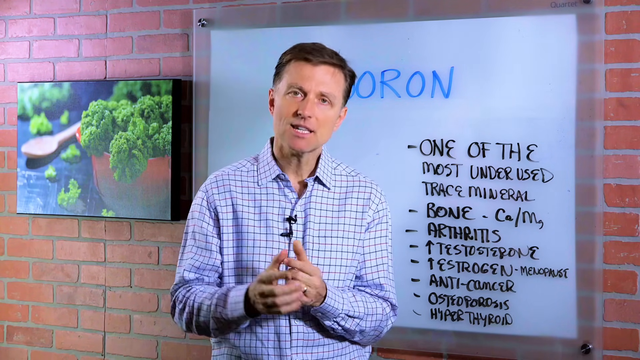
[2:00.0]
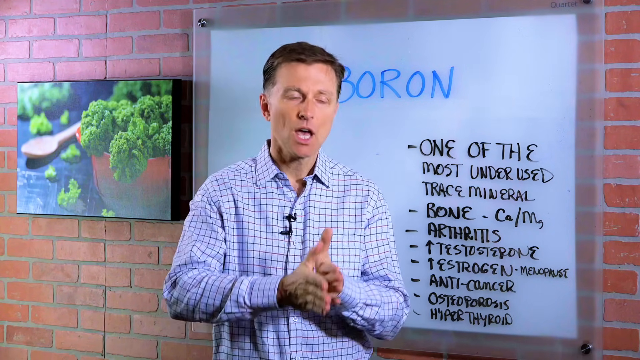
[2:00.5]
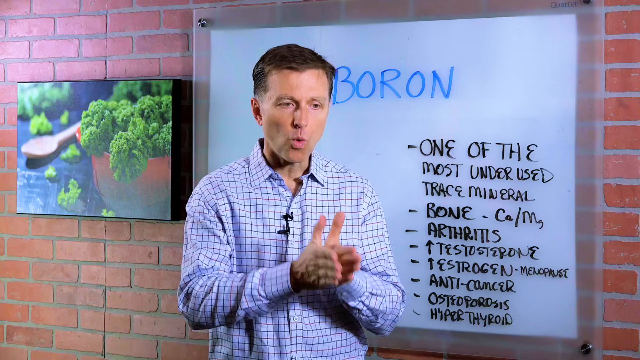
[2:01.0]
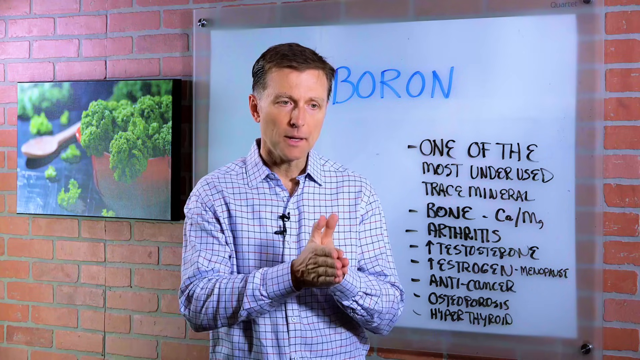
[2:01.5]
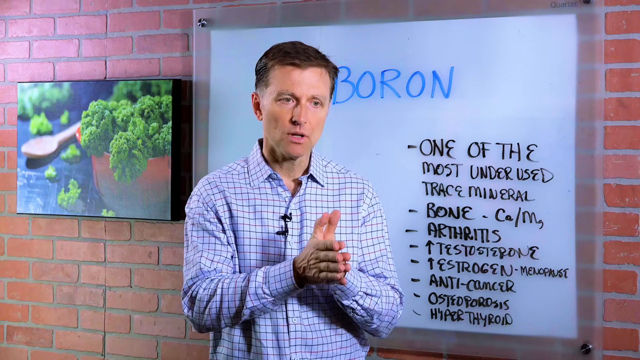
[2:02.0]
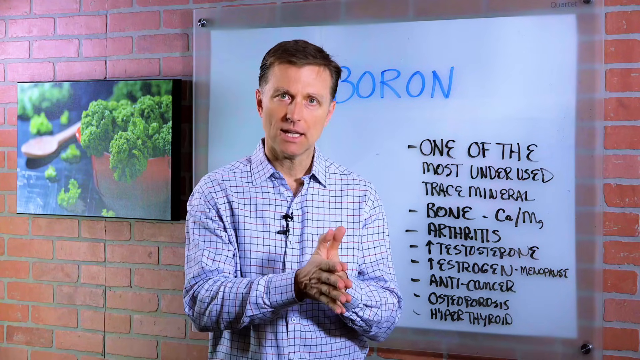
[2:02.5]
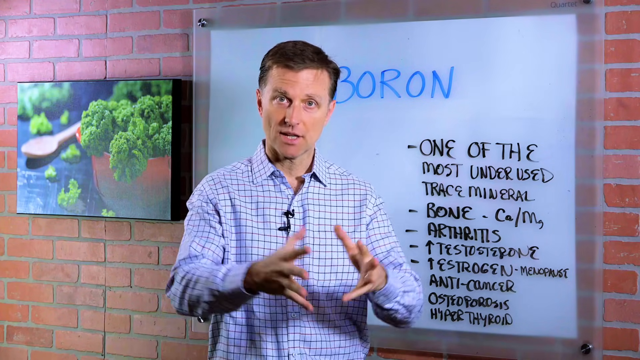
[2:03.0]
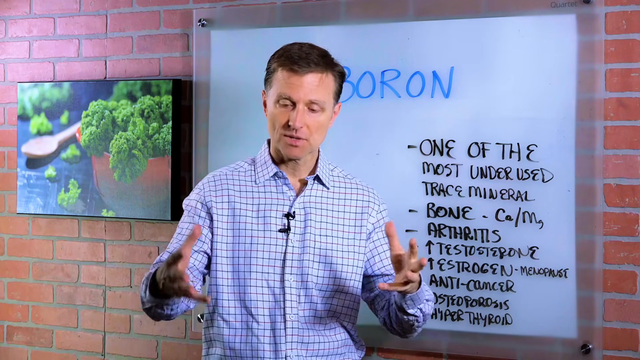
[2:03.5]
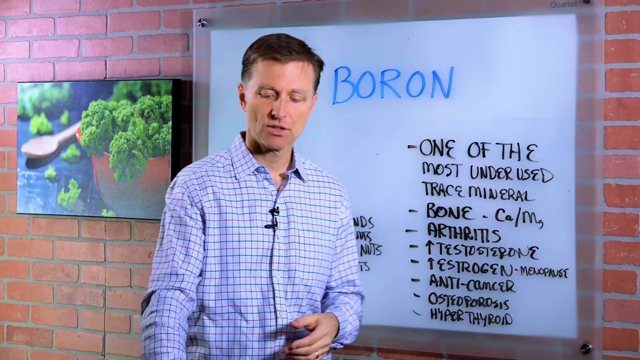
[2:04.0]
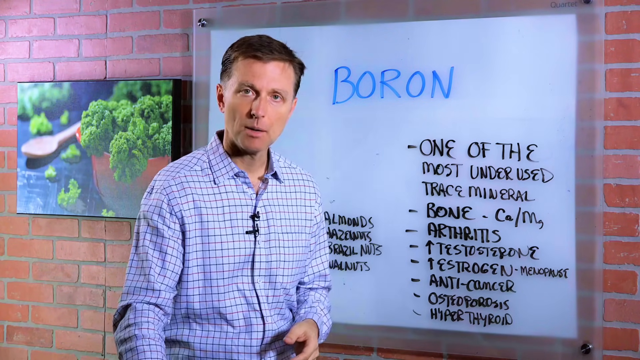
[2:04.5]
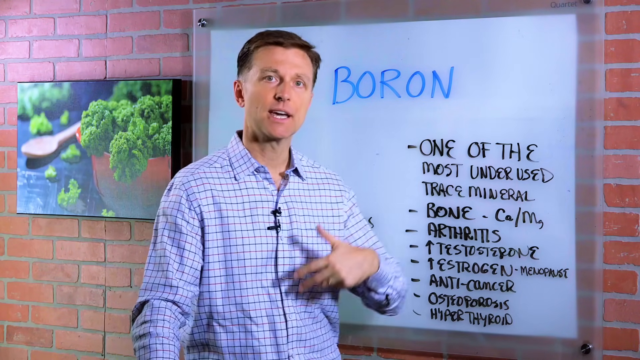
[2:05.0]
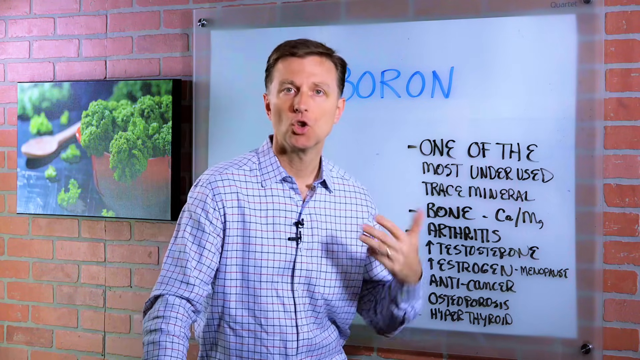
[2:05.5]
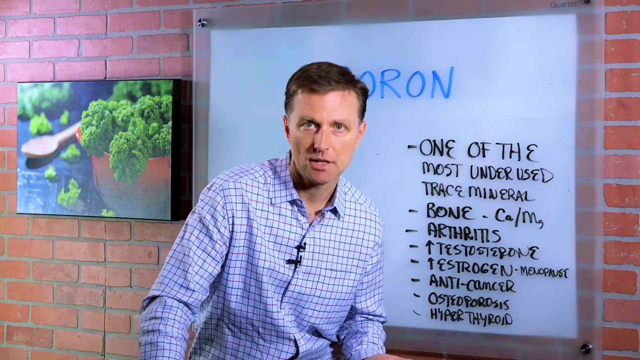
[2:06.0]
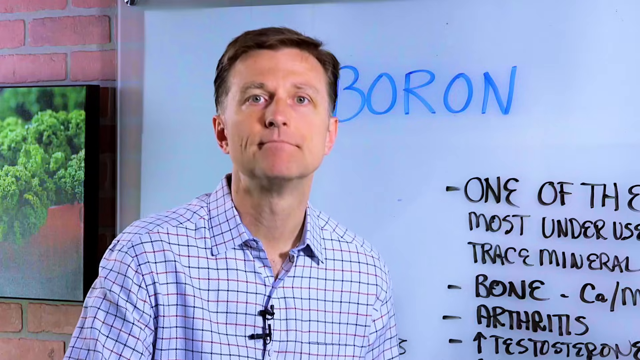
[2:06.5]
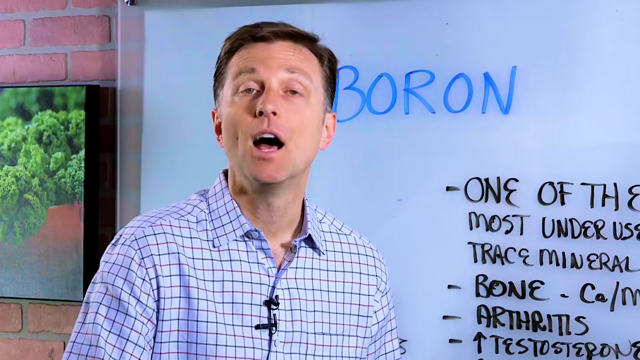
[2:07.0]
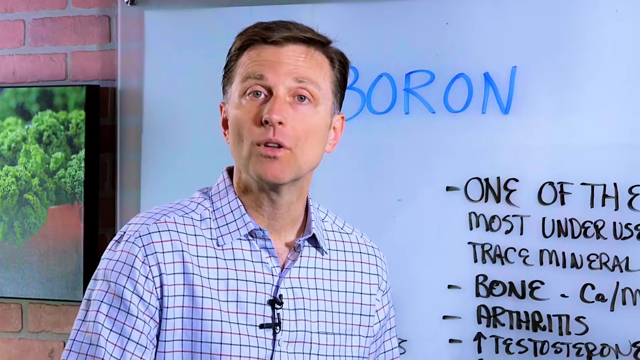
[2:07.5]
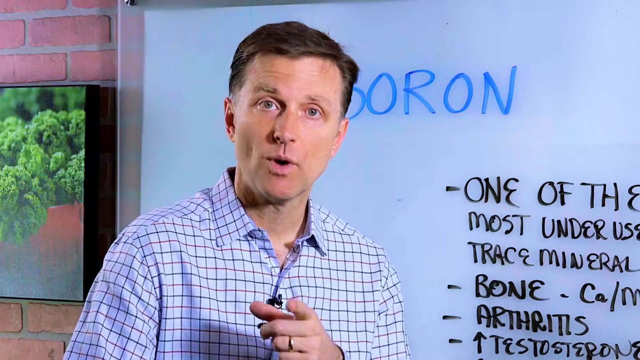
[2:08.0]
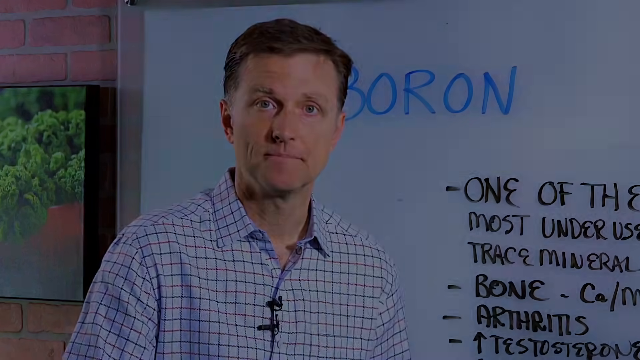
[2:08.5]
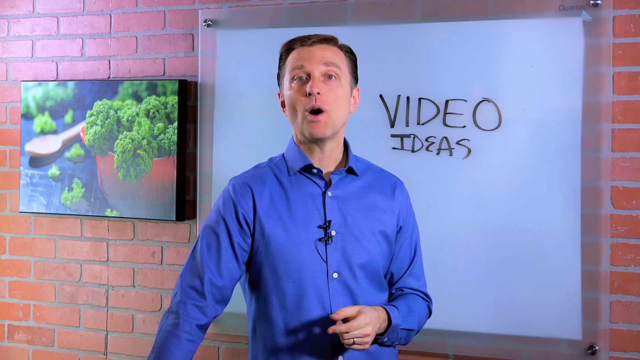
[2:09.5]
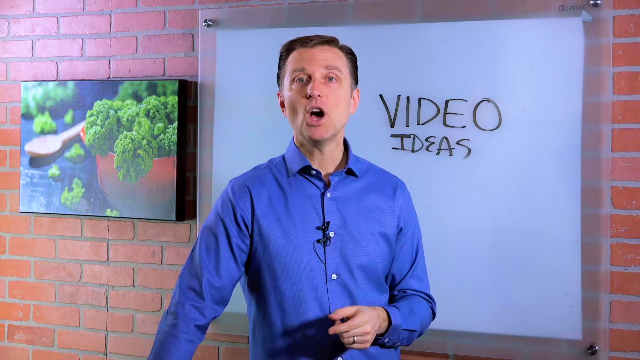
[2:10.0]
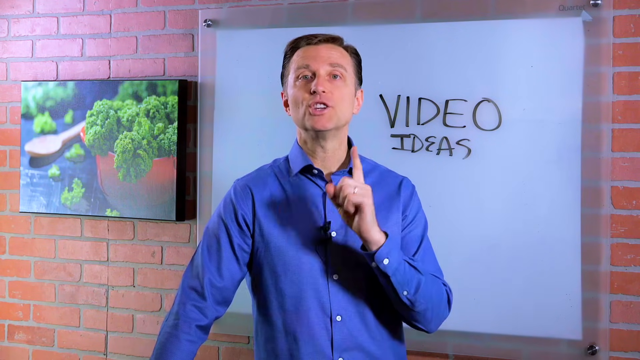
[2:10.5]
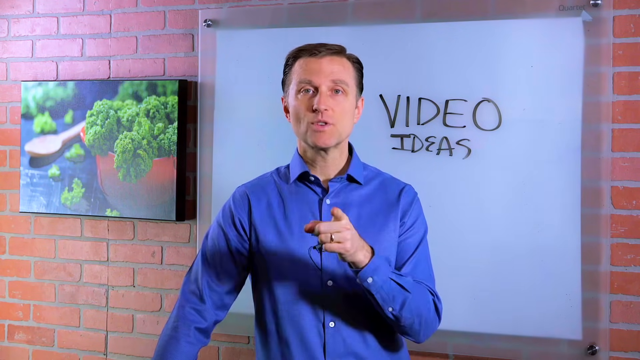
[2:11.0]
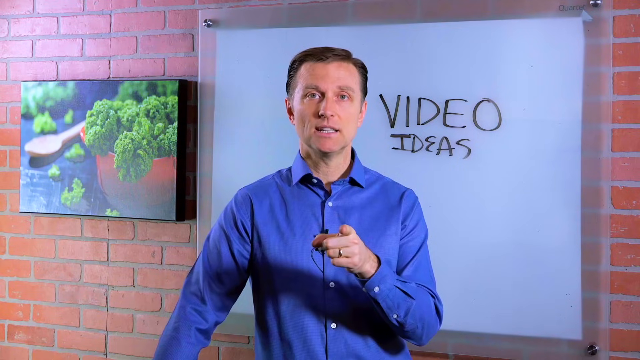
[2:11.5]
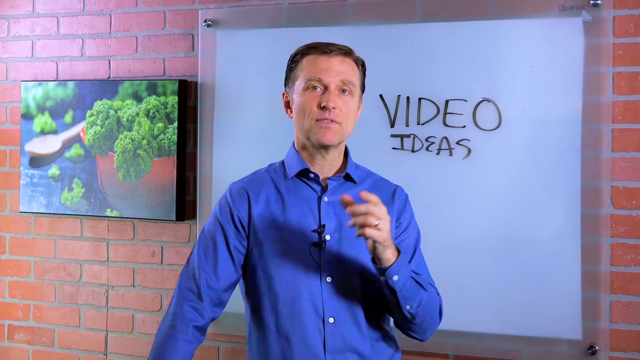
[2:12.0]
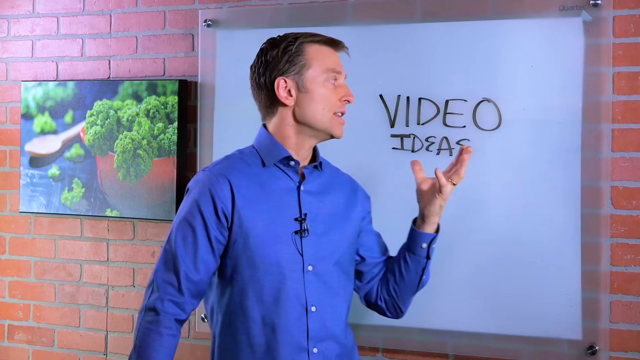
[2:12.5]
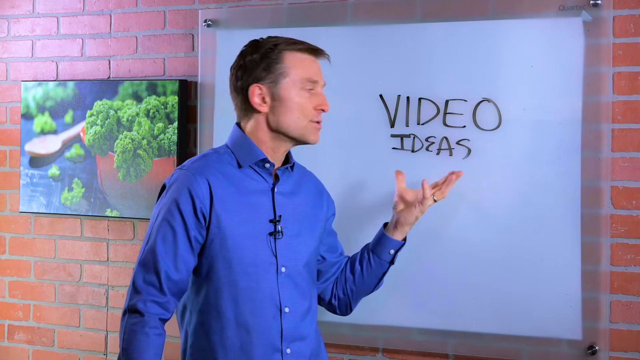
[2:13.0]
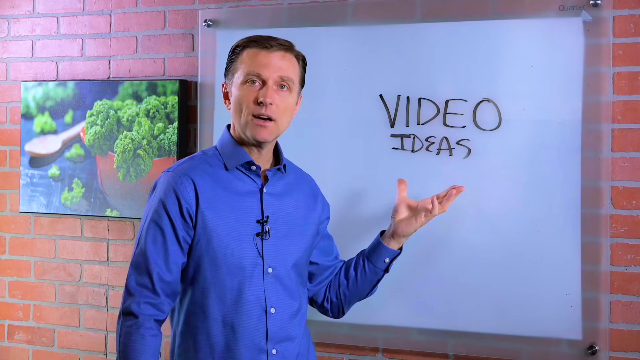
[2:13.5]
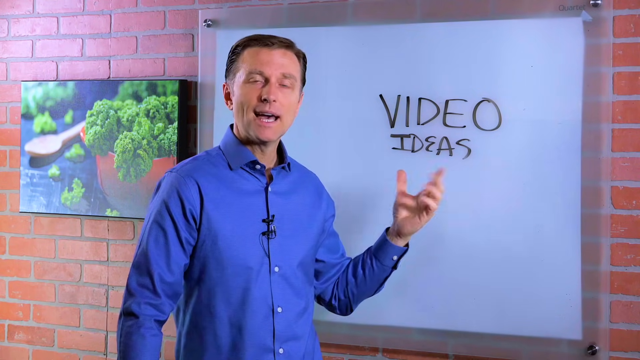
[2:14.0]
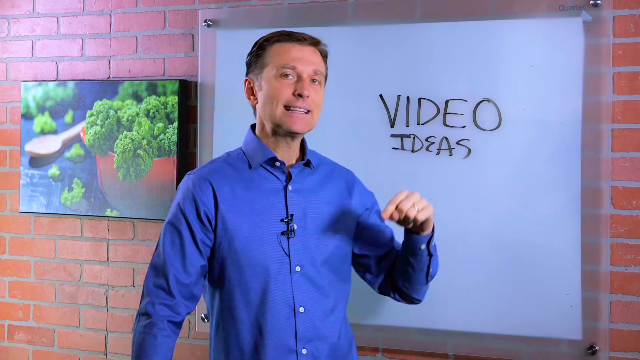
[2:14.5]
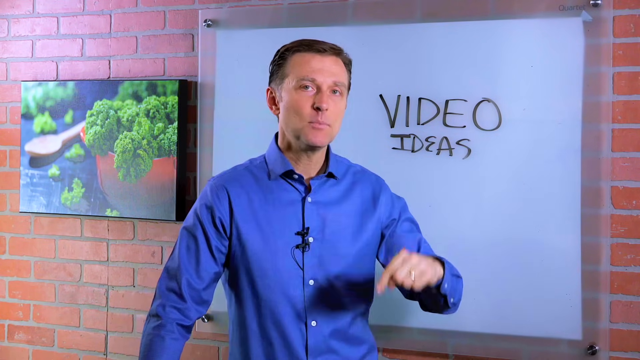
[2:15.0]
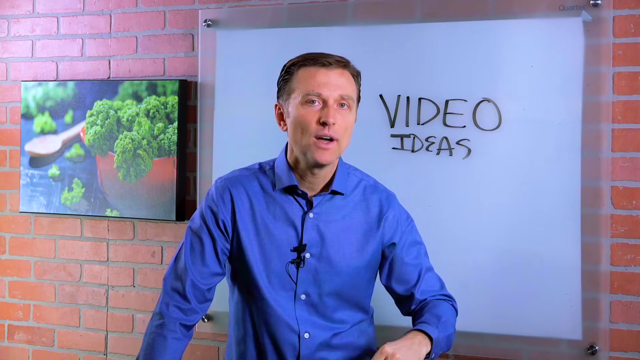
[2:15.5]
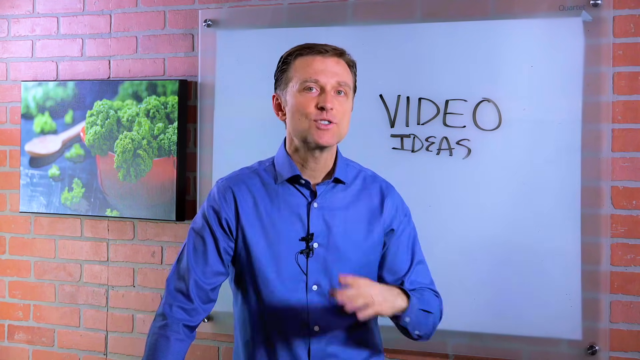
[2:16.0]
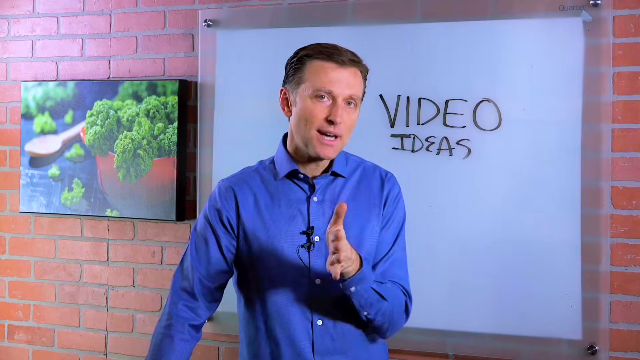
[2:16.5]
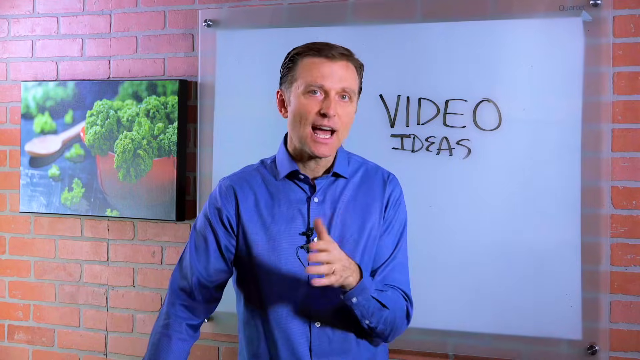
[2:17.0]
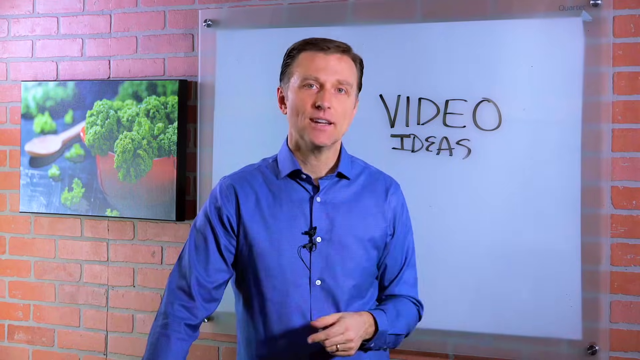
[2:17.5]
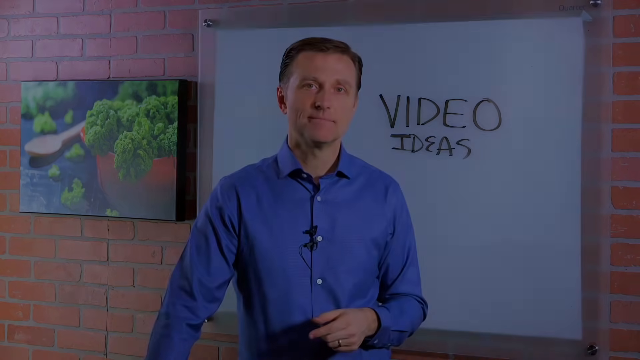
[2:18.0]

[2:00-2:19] A man stands in front of the camera, talking into it, wearing a light blue shirt with dark blue lines on it. He is then shown wearing a very dark blue shirt. In the light blue shirt, he stands in front of a white board with the word "Boron" written in blue; in the dark blue shirt, he stands in front of the board, which says "Video Ideas" in black. Beside the board is a black-framed painting of a brown bowl with green broccoli coming out of it, with a small brown wooden spoon beside it. Underneath "Boron" the board says "one of the most underrated trace minerals," then "bone," with "arthritis" underneath, followed by "testosterone," "estrogen," "anti-cancer," "osteoporosis," and "hypothyroid." Also in black it says "hazelnuts, walnuts, brazelnuts, and peanuts."